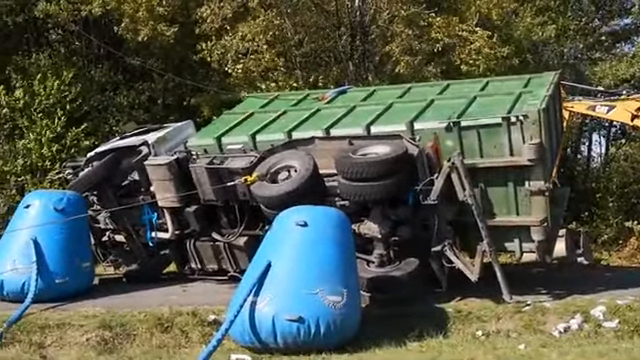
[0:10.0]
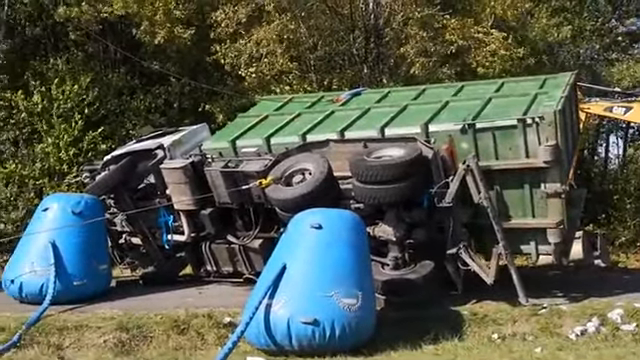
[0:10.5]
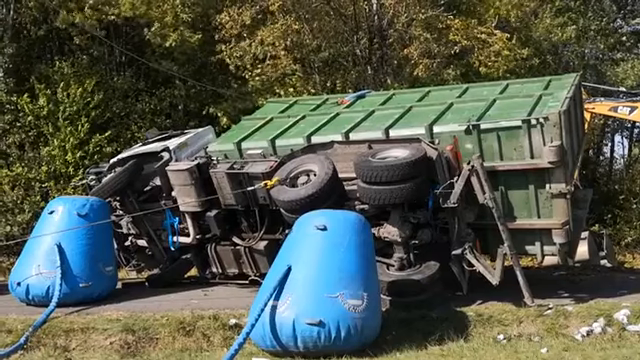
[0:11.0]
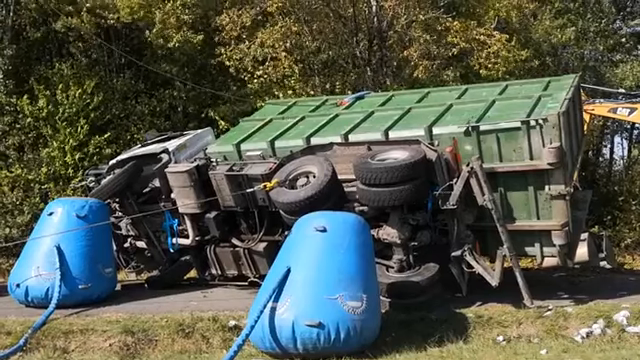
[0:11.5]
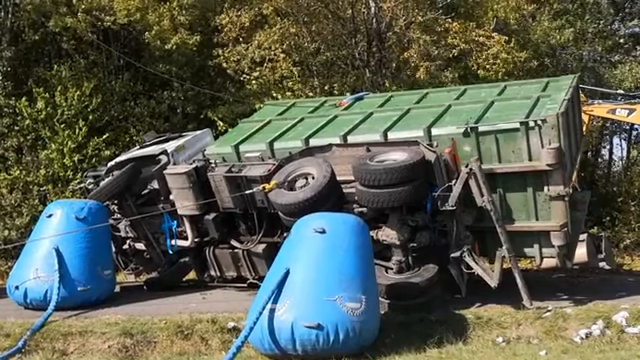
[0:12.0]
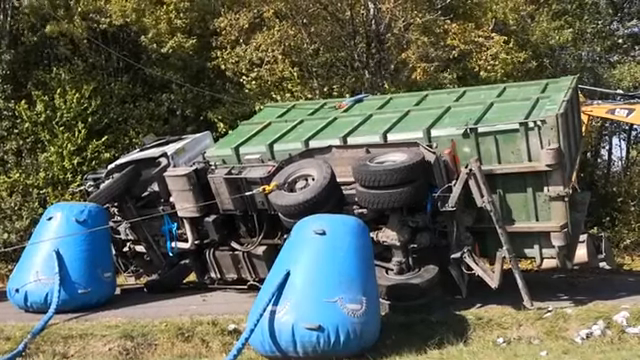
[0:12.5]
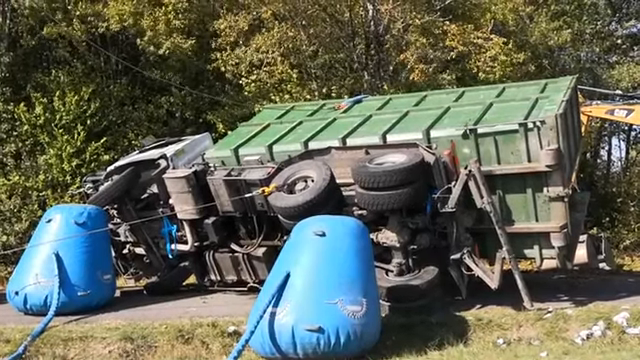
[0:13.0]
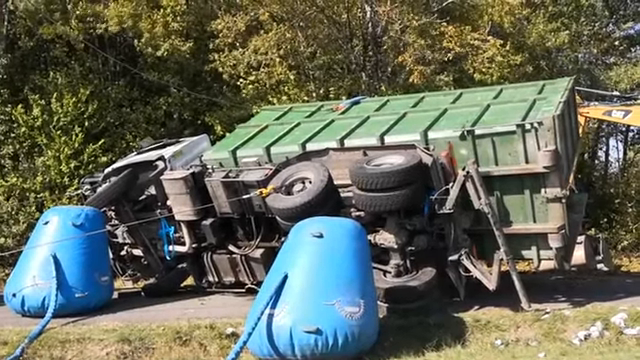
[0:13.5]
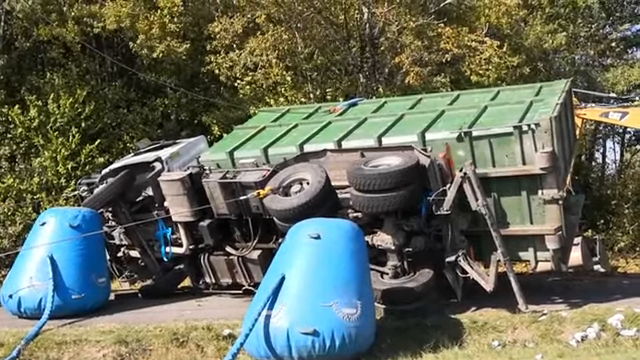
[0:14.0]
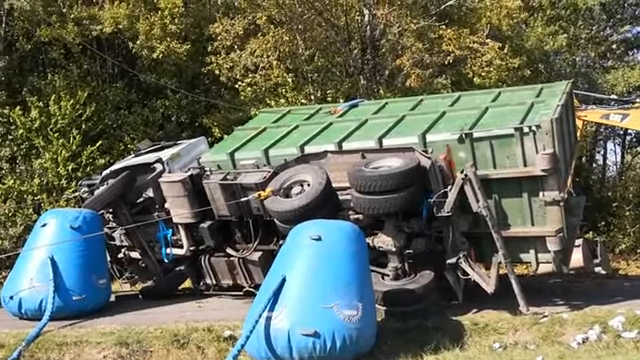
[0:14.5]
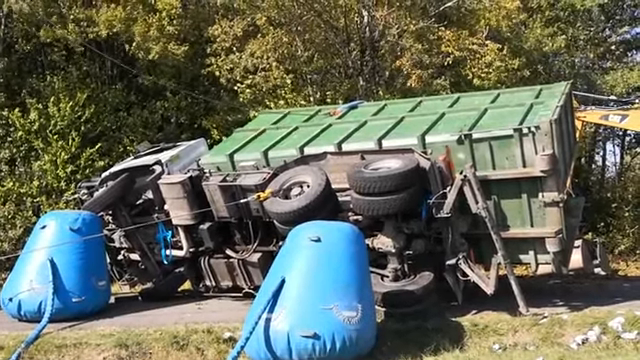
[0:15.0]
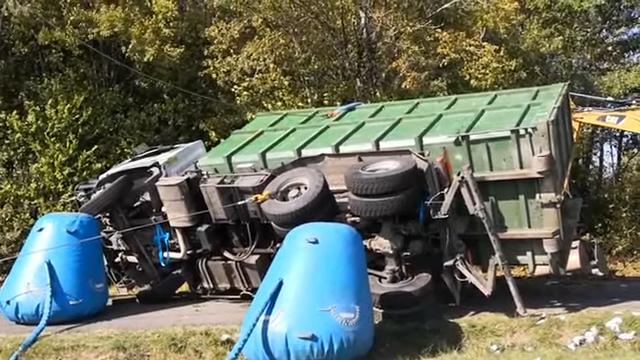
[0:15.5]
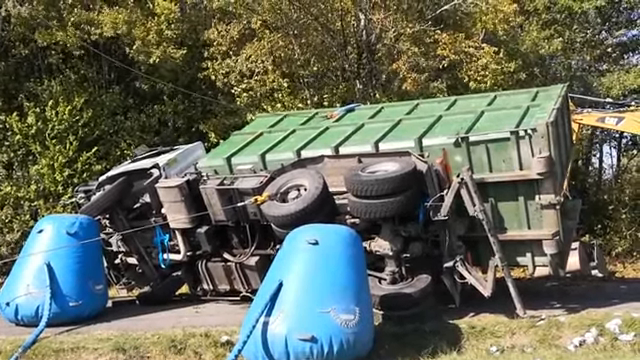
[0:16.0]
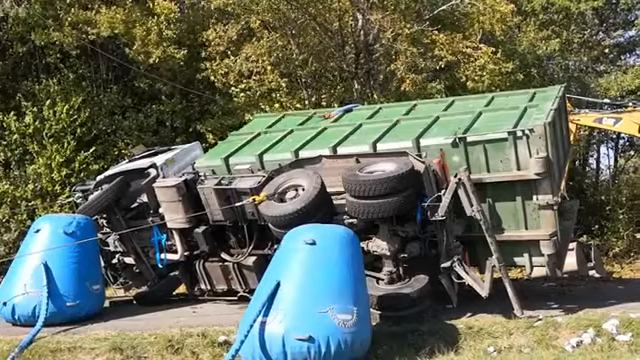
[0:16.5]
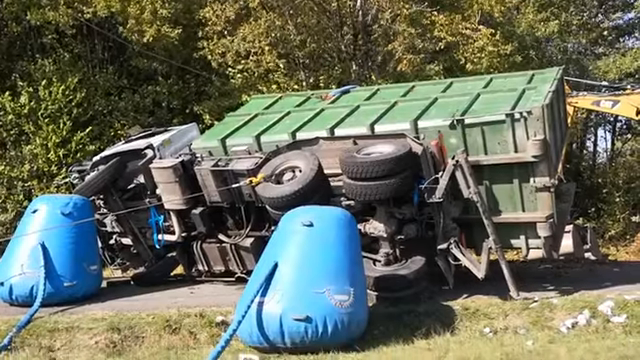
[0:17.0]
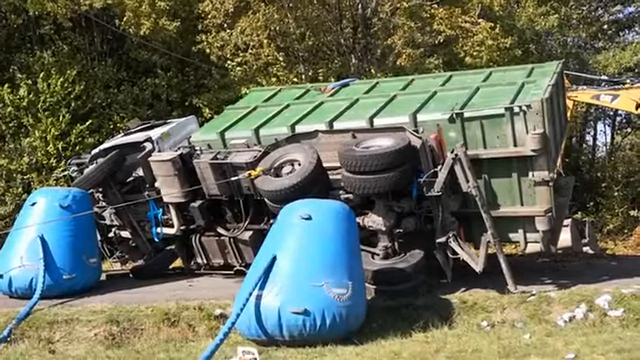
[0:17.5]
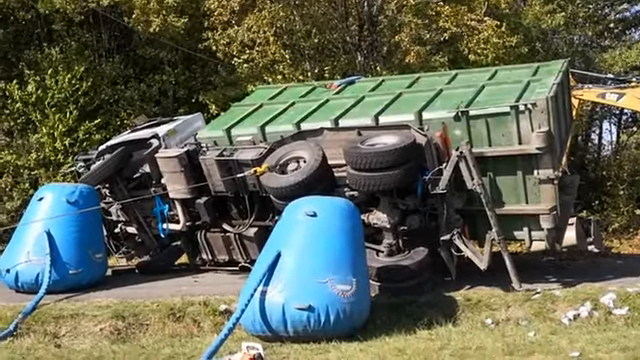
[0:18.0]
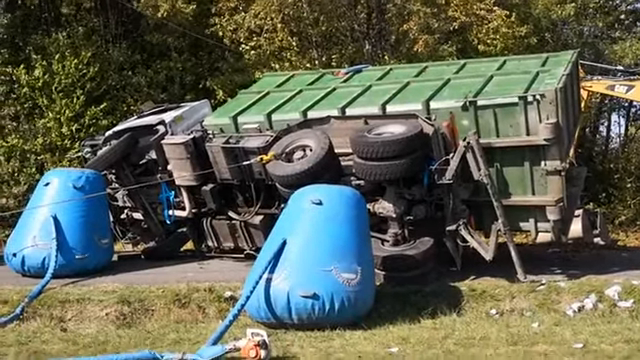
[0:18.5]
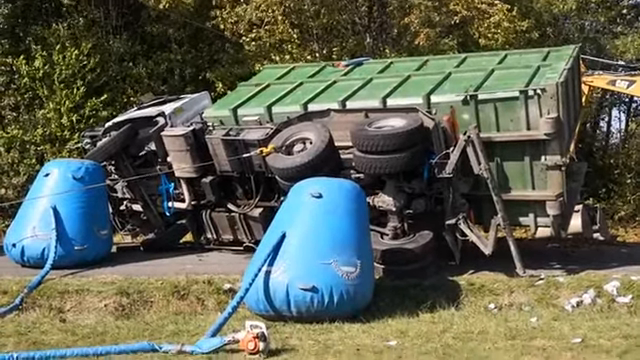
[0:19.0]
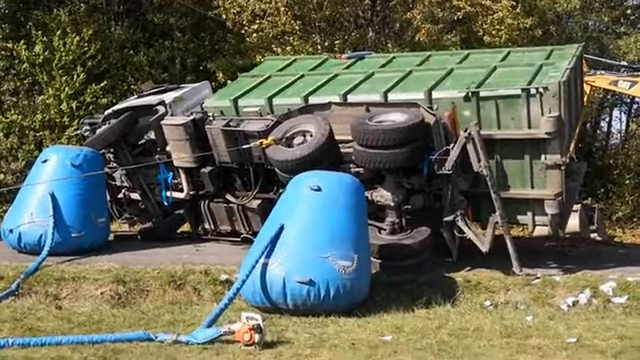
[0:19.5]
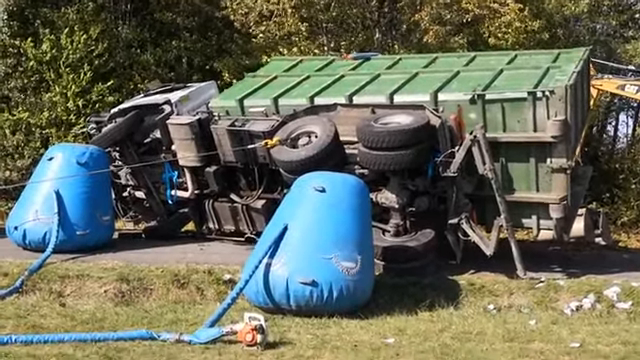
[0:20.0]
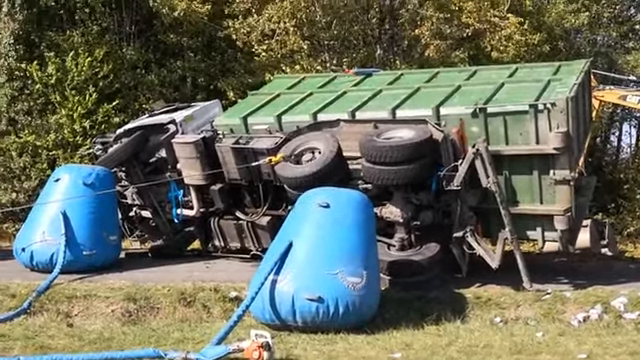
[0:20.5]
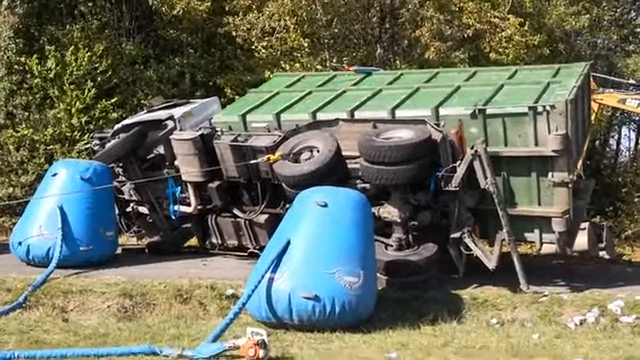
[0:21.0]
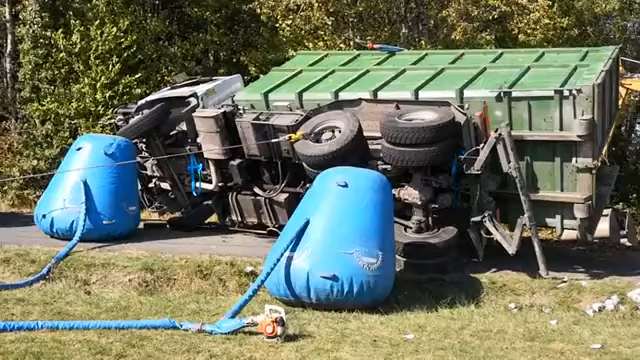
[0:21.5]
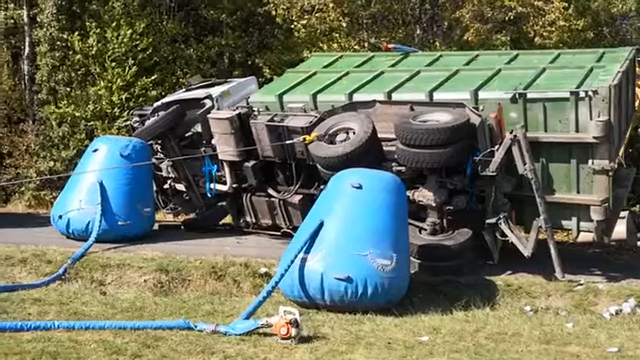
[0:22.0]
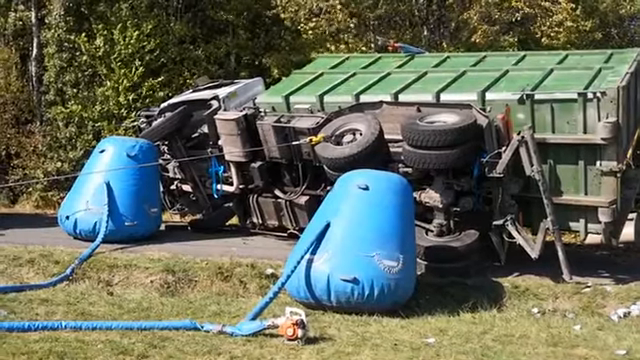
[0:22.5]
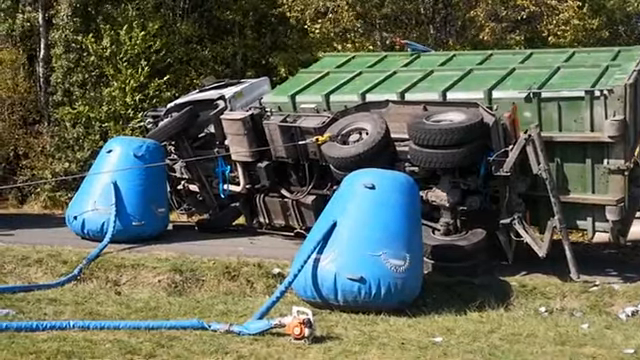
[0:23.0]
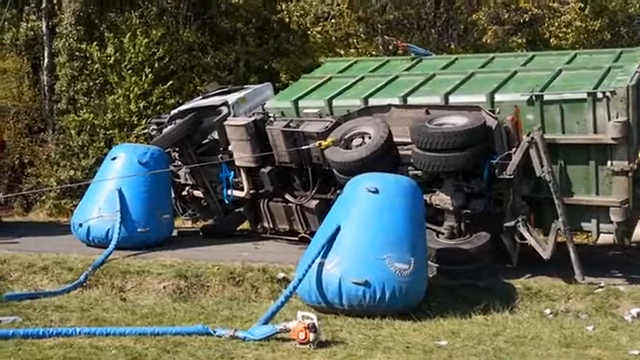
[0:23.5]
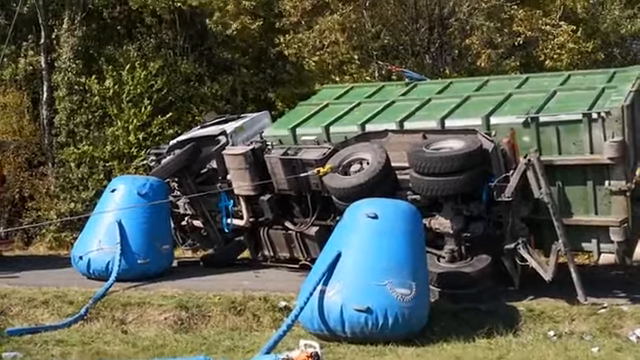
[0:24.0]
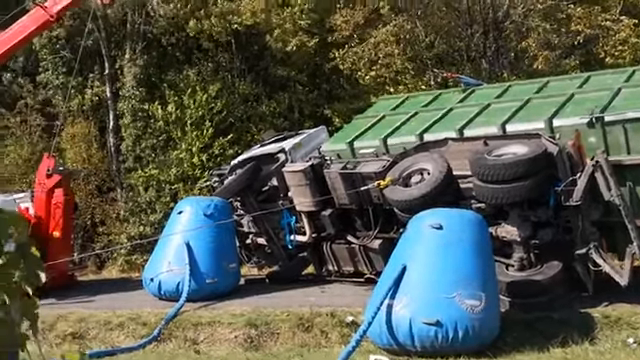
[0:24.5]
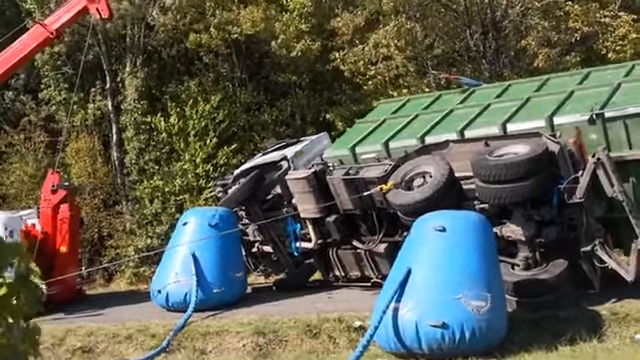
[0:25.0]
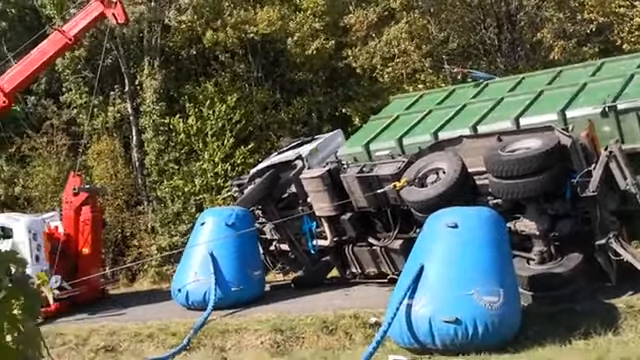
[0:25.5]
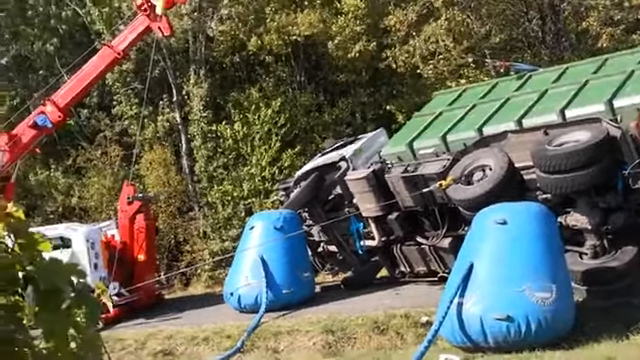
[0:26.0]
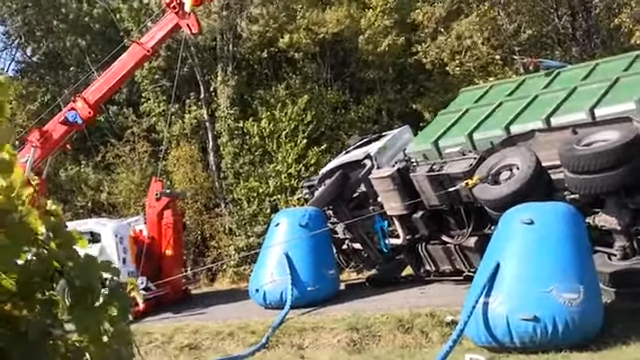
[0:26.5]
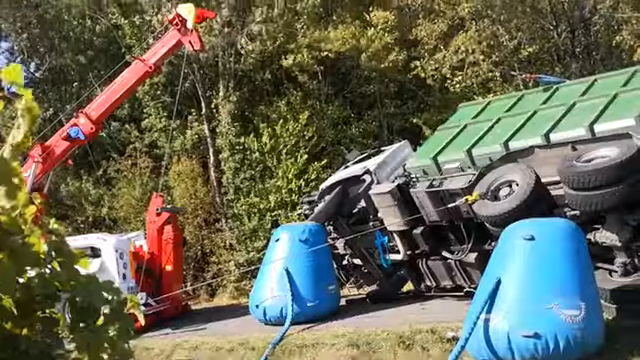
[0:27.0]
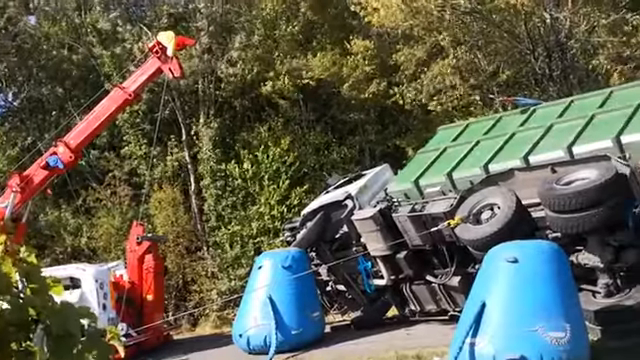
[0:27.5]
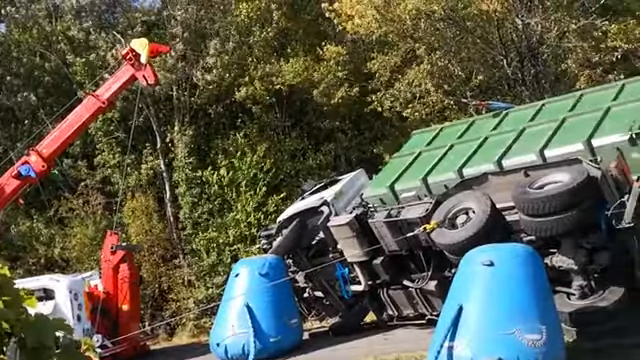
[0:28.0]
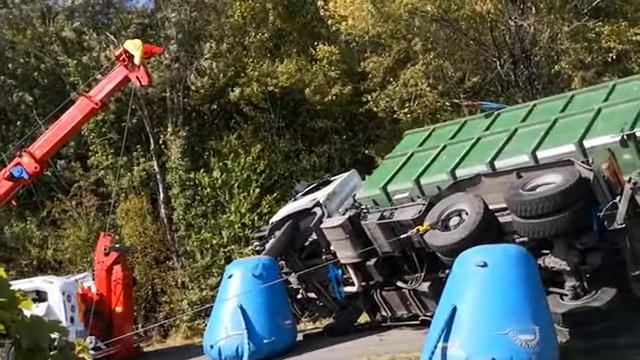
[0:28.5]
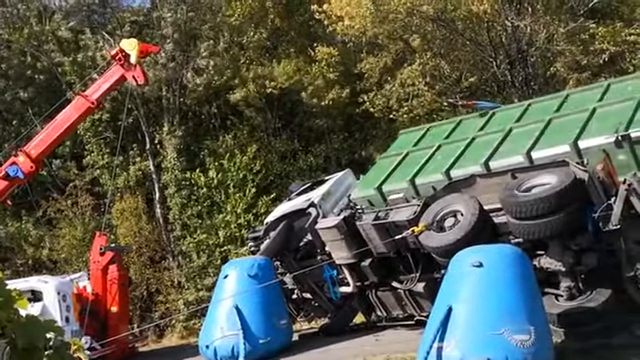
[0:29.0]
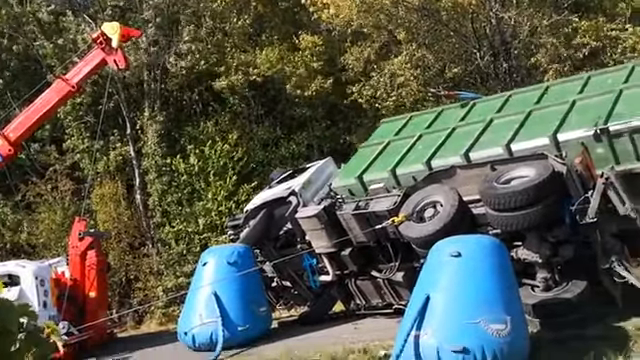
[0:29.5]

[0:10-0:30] The overturned green-bedded truck remains in view with wires attached to it, and it looks like it is slowly being pulled. The setting is outside in a foresty area with a lot of different trees, and it is windy, with the leaves of the trees blowing in the wind. The camera pans a little to the left, showing the arm of the crane, which appears to have wires coming out of it attached to the truck's wheels and other places. It appears that people are trying to right the truck, but it has not really started moving yet. Something yellow is behind the truck: a piece of Cat equipment that is hard to make out because the truck blocks it. In front of the truck's tires are the blue blown-up objects that look like ocean buoys but somewhat larger, possibly there to cushion the truck if it lands hard when it is righted.